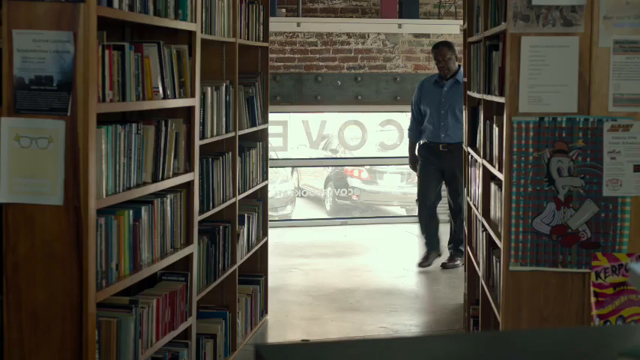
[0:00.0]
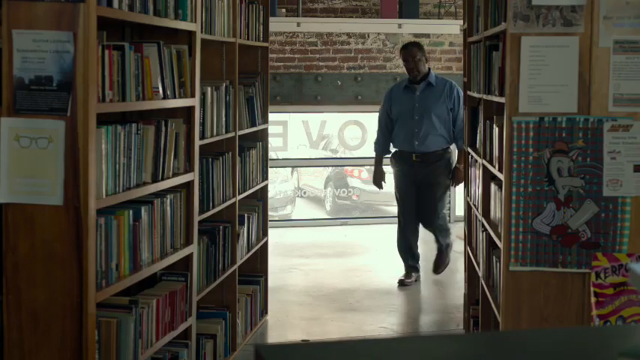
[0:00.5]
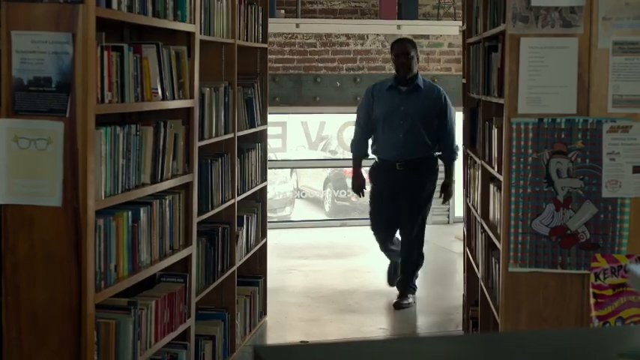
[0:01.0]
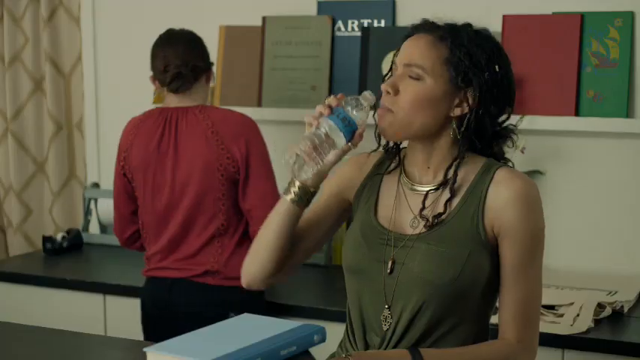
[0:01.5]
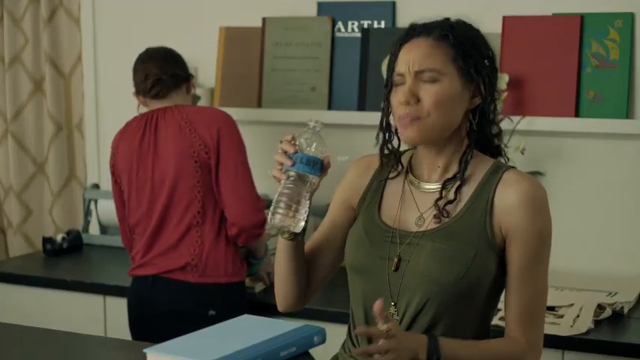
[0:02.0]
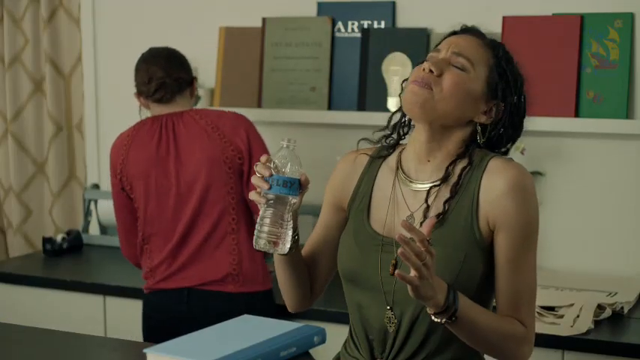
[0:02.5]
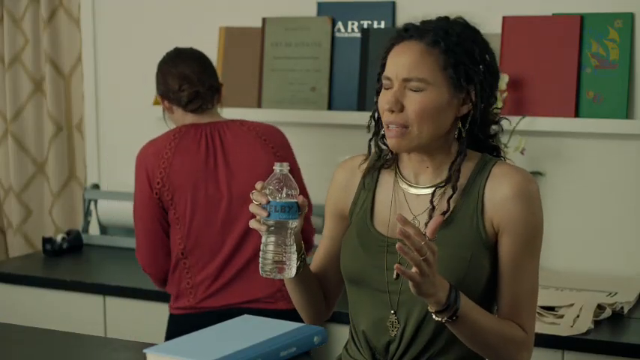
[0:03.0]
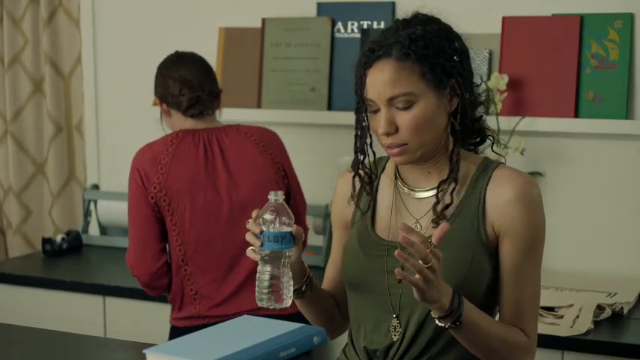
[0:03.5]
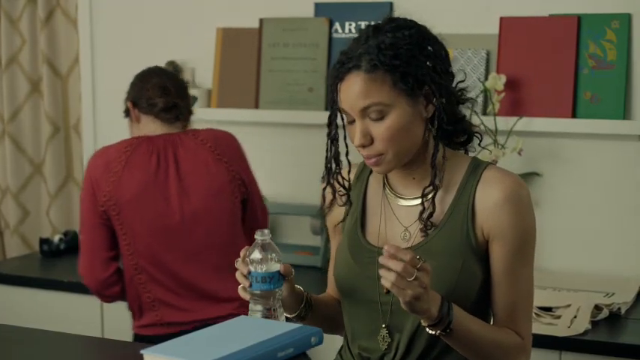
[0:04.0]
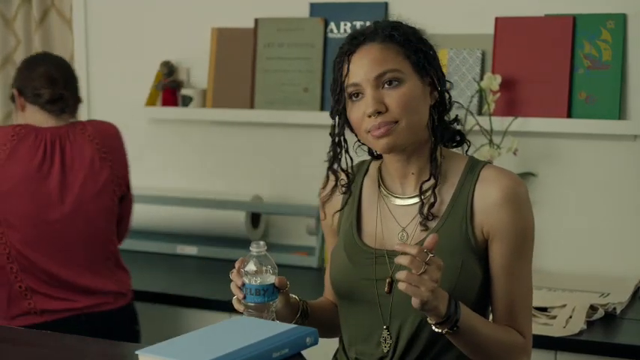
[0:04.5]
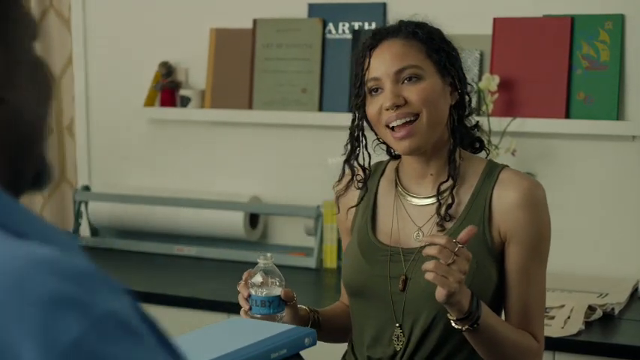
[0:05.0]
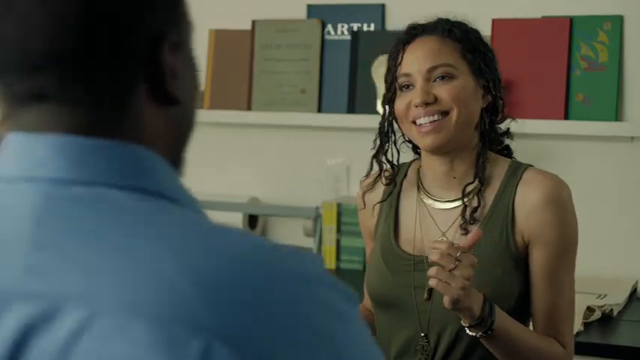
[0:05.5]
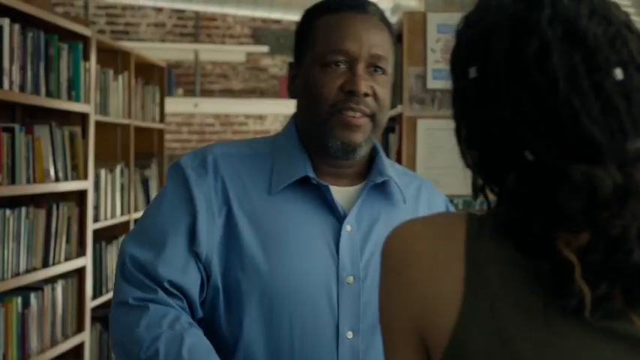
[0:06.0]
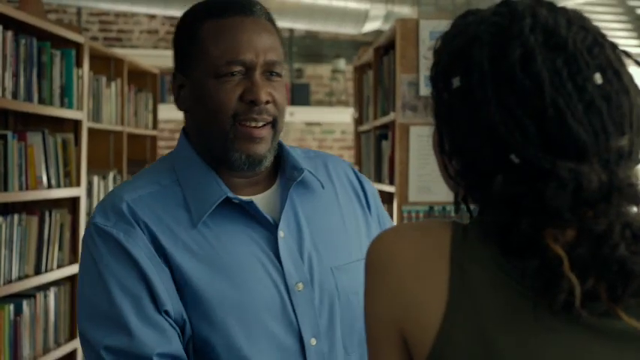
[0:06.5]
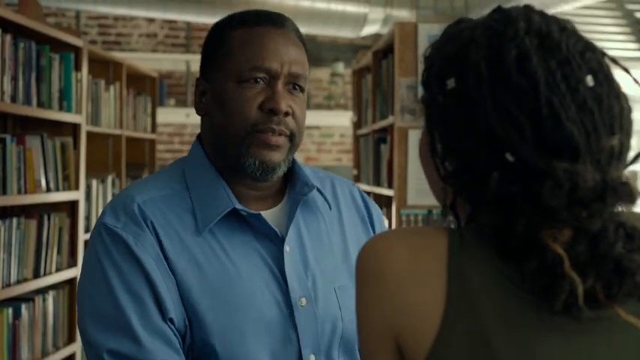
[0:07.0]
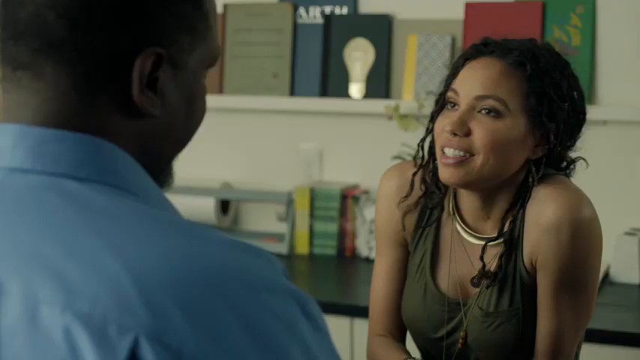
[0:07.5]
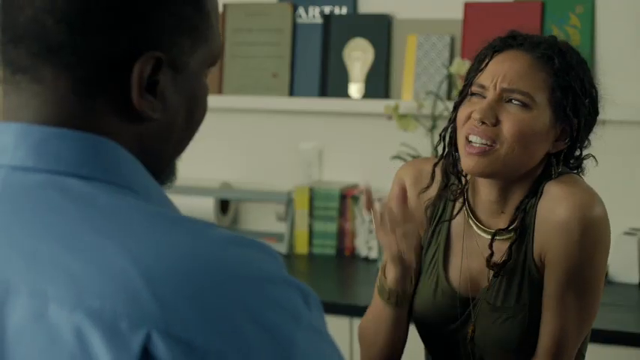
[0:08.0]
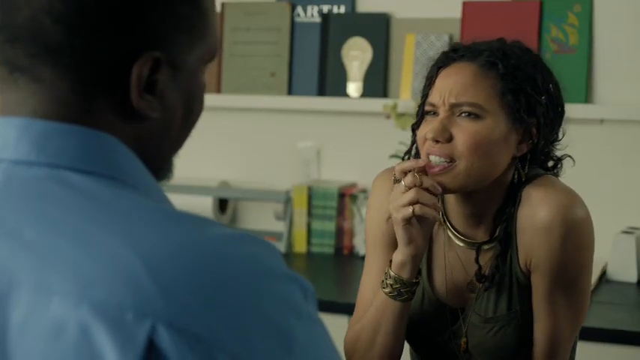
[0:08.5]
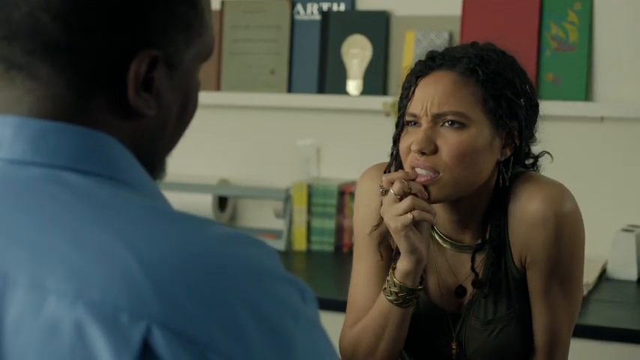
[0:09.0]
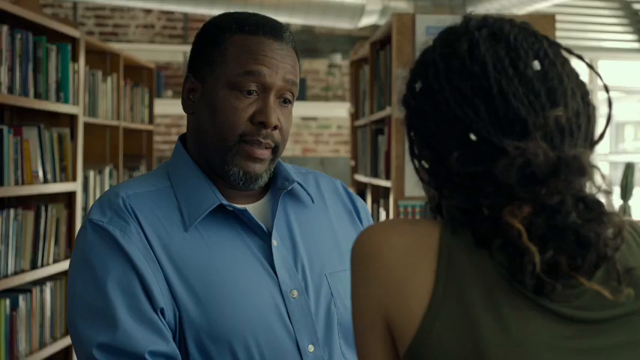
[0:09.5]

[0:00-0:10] A Black man stands in the center, roughly facing the camera, with his right leg raised slightly, so he looks like he is about to walk toward the camera or maybe to the side. He wears a light blue collared button-up shirt, dark pants and a belt, and he is probably middle-aged, though the shot is a little dark and blurry. He is at the end of two bookshelves, and light coming through a window behind him leaves him shaded. He starts walking toward the camera. The scene switches to a young Black girl seen from the torso up, wearing a very dark green tank top, with long black hair. She holds a bottle of water in her right hand, takes a sip, puts her face back and makes quite a face. She then looks up, smiles at the Black man, says hi, and he smiles back. The shot then shows her from behind in the lower right and him just left of center from the chest up, facing her.